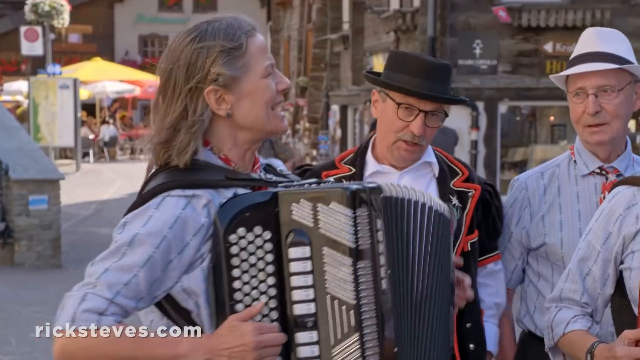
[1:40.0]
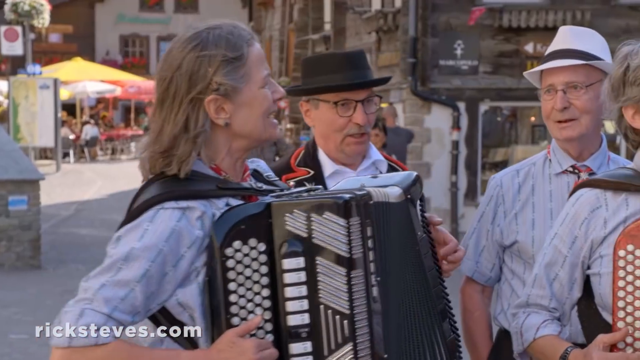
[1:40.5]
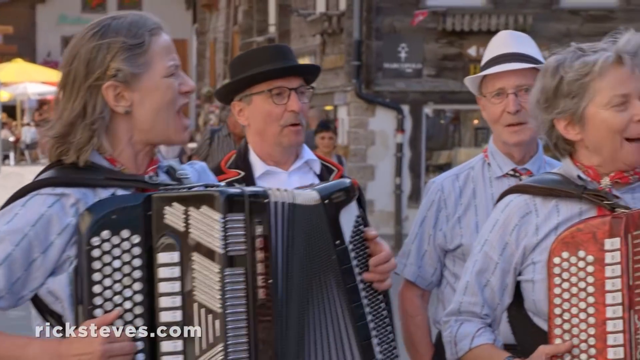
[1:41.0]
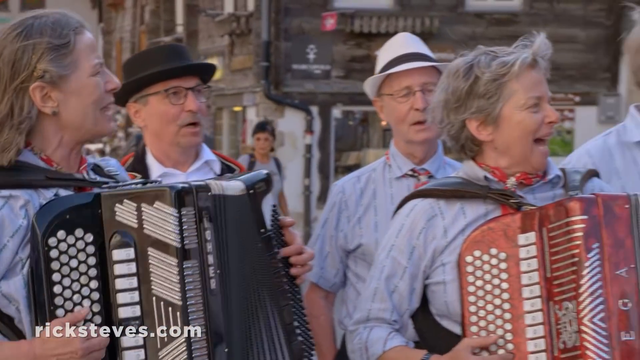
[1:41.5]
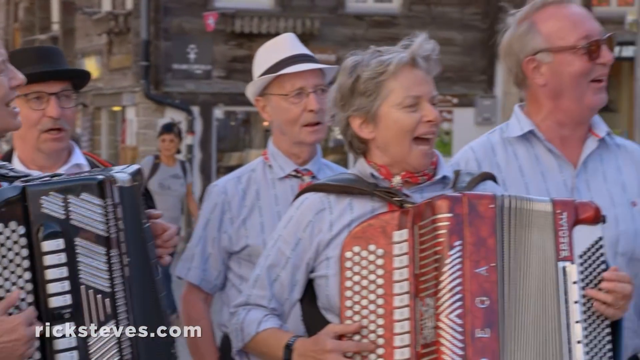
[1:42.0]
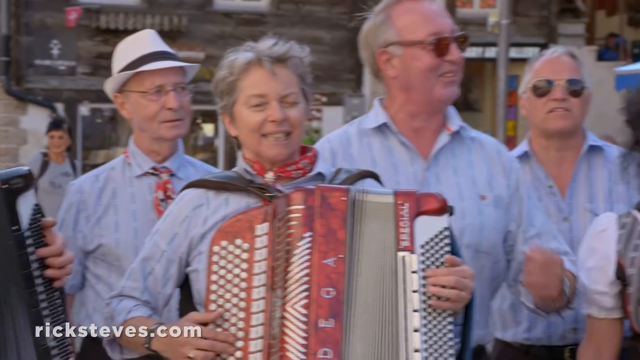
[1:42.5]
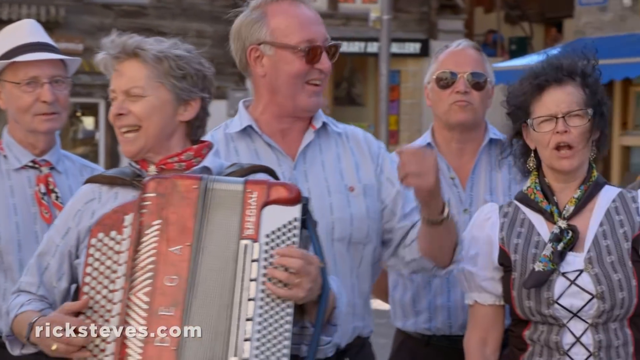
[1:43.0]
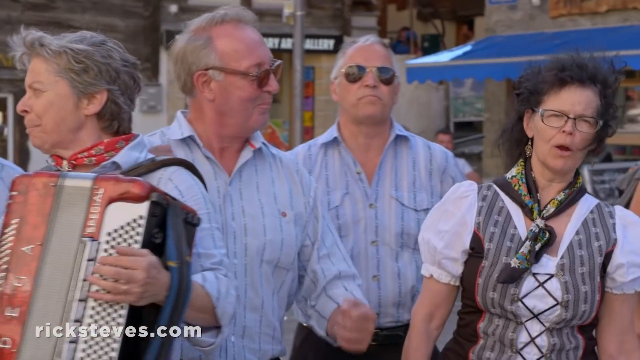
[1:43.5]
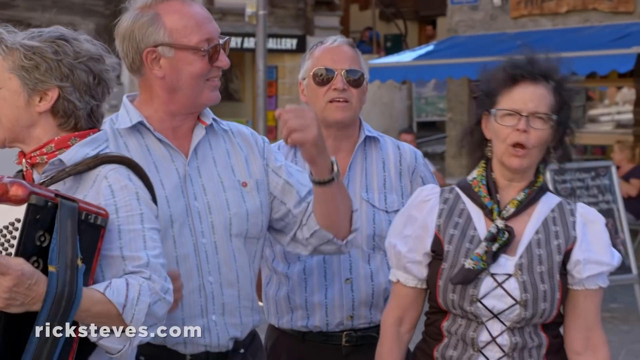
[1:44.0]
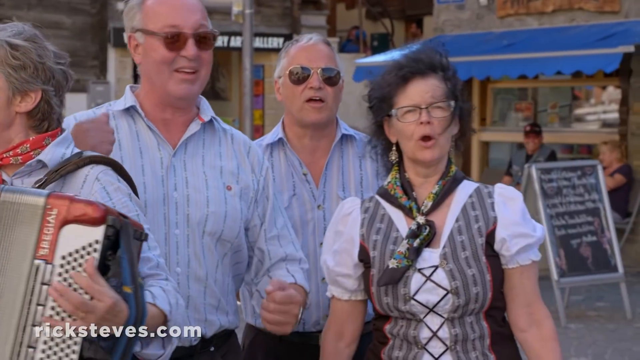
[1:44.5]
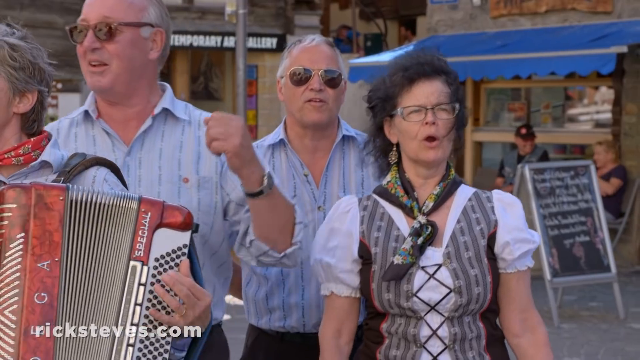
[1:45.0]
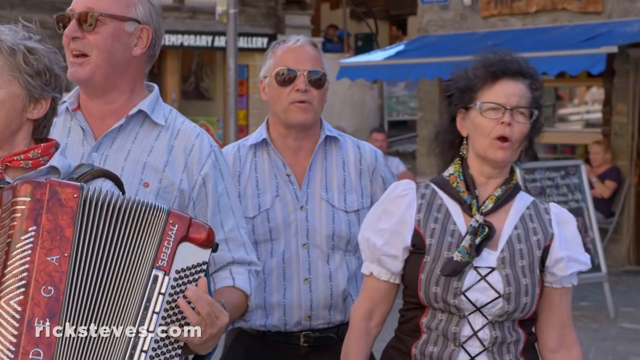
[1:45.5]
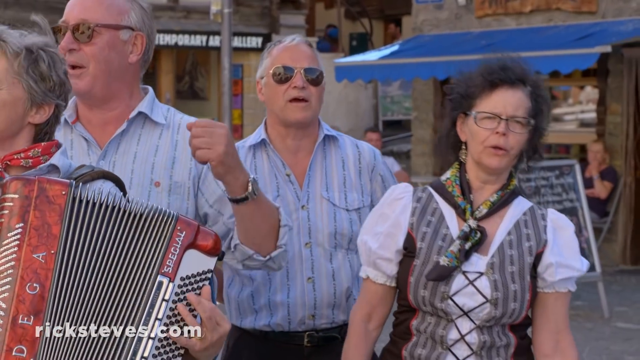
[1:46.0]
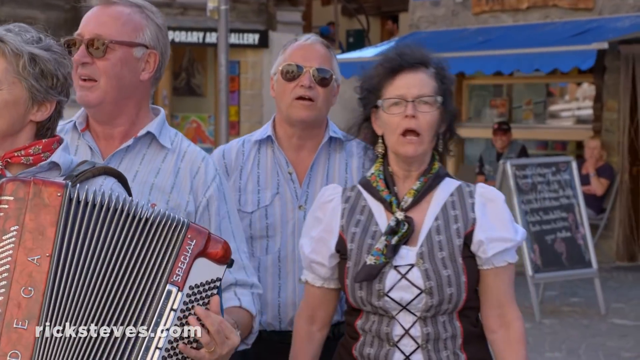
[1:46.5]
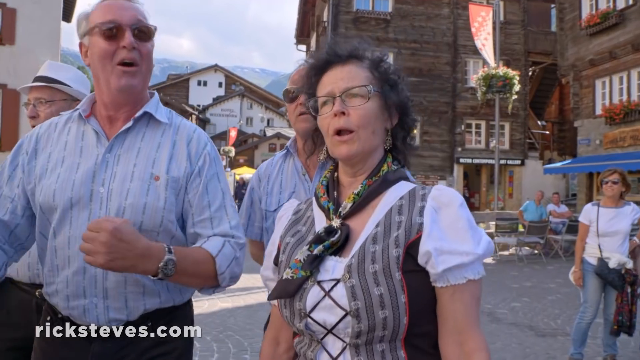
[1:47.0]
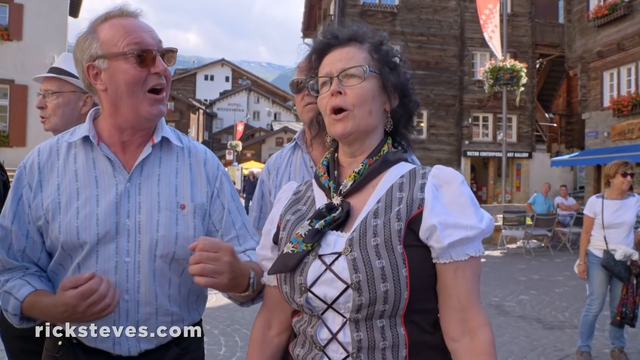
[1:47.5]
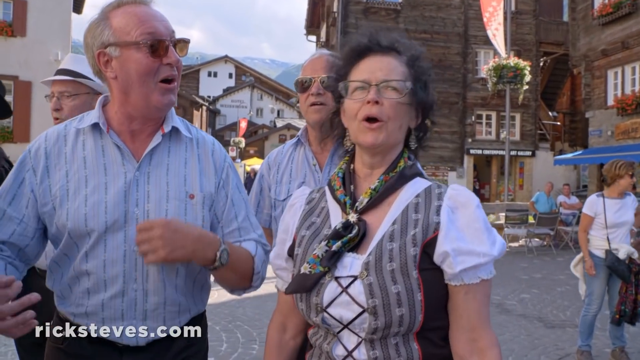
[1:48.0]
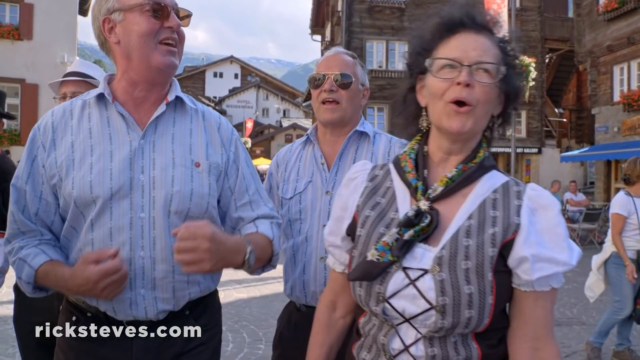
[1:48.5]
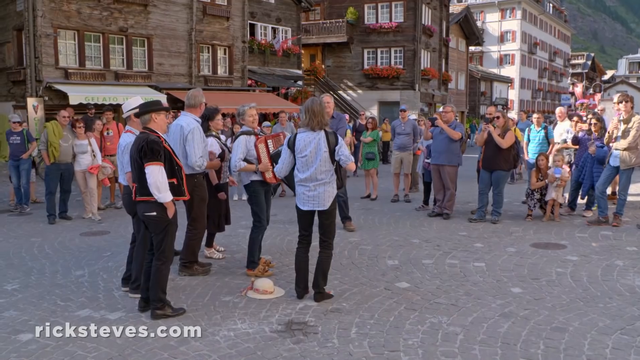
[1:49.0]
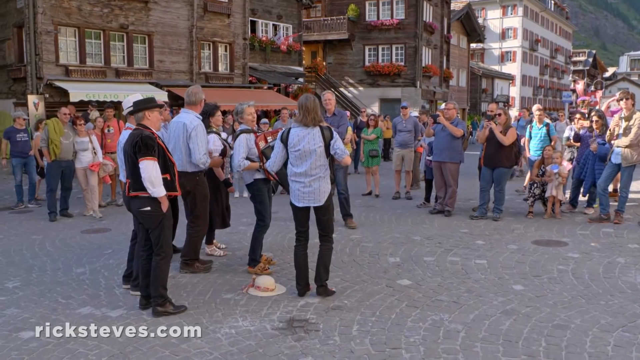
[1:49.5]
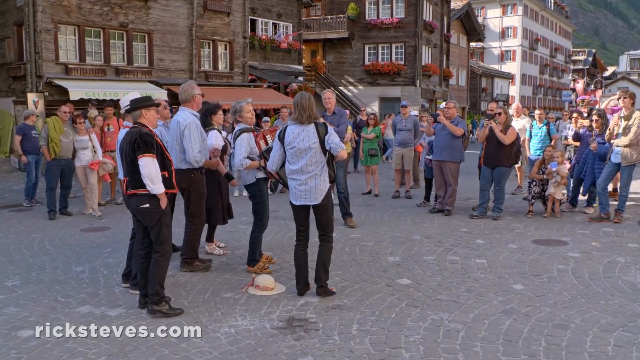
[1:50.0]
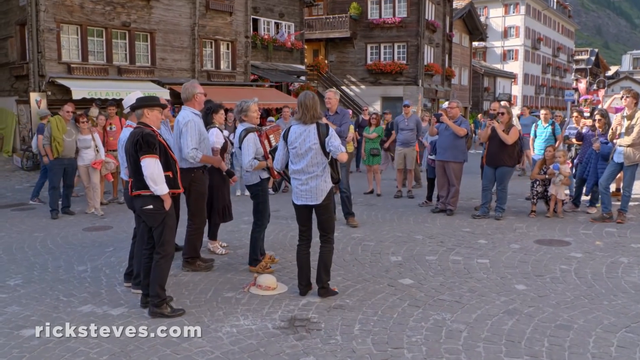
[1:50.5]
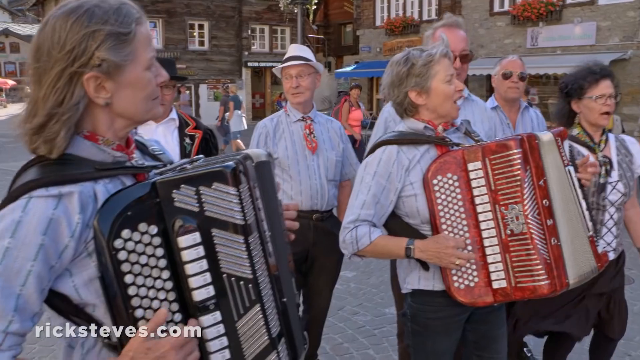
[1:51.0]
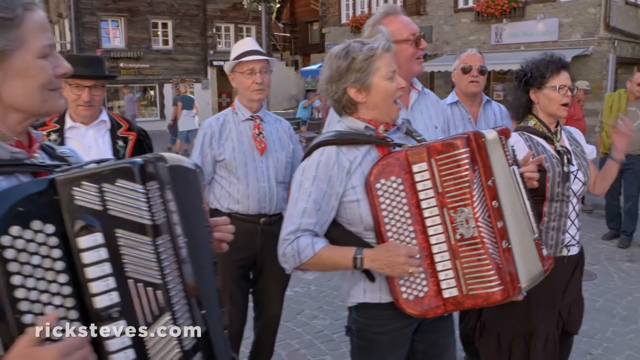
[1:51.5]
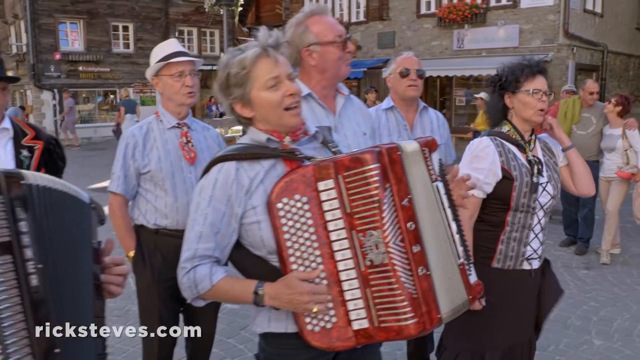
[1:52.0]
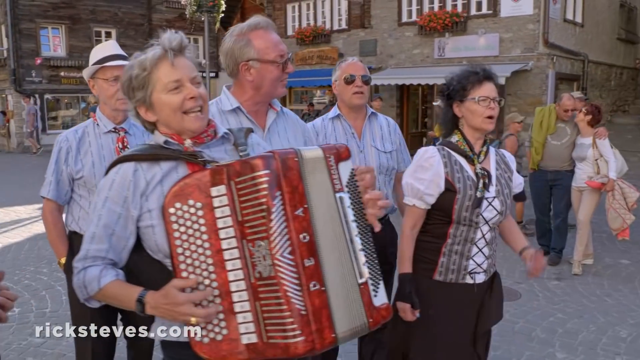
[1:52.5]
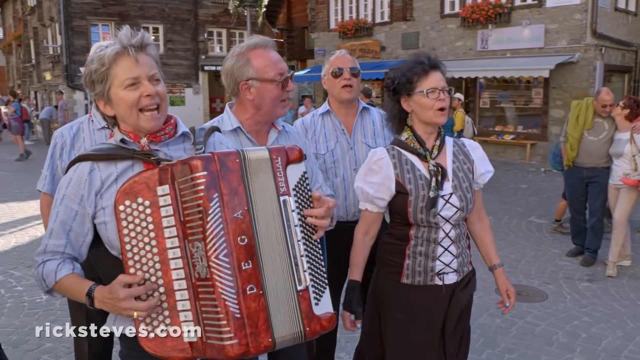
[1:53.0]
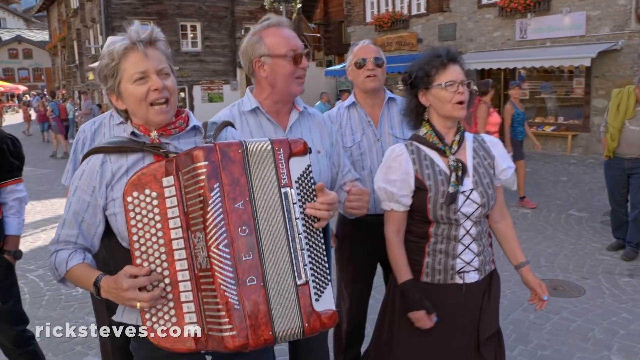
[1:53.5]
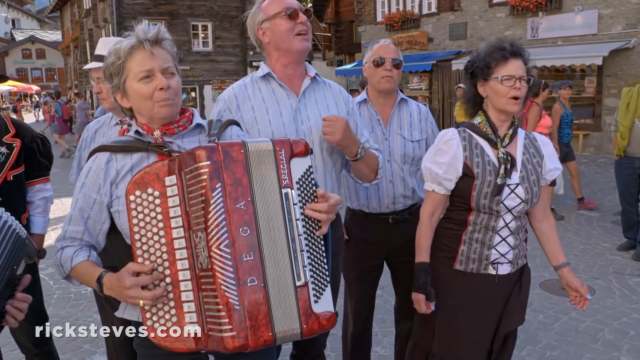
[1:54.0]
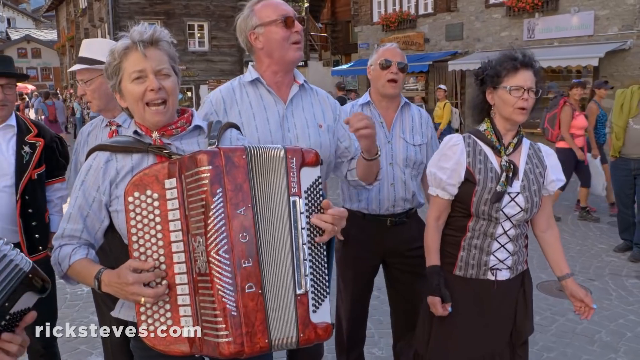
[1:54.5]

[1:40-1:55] The video is about Zermatt, Switzerland, finding charm in the Swiss Alps. The group performs in the middle of the street during the day. Two women in front each play an accordion, one black and one red, and everyone sings; about three or four men and another woman sing along. A group of tourists has stopped to listen. In the background is a restaurant or something similar, apparently a bakery, where people sit on chairs watching the show. One of the singing women swings back and forth, and a couple of the men dance and move to the music. They are all smiling and seem happy. A couple of the men wear sunglasses, and a couple wear what look like traditional Swiss-type jackets, like a costume.